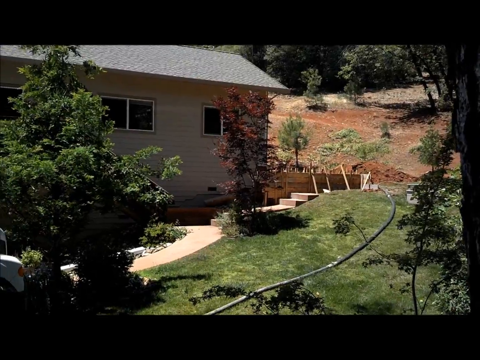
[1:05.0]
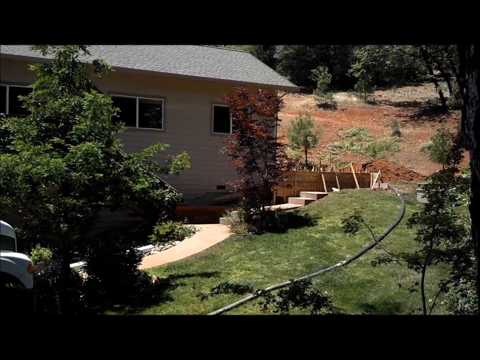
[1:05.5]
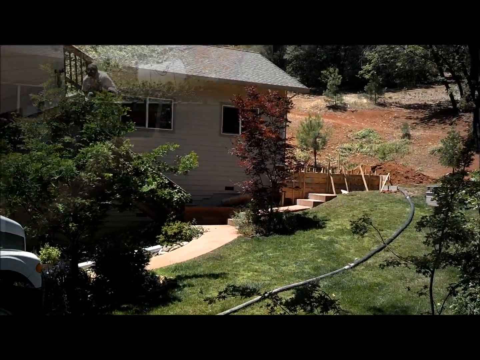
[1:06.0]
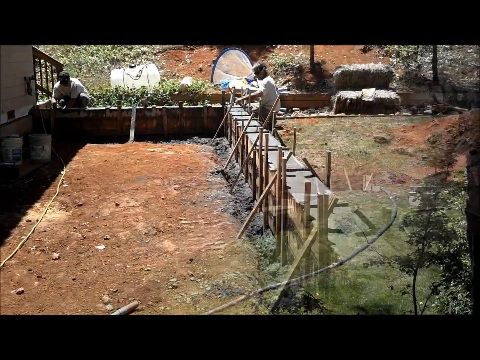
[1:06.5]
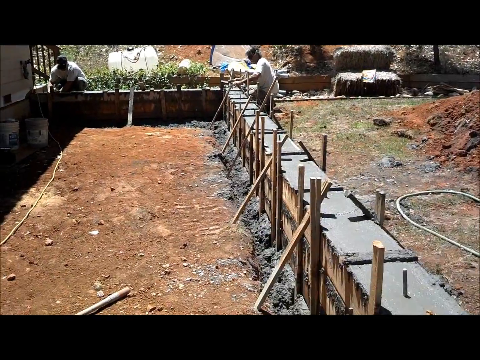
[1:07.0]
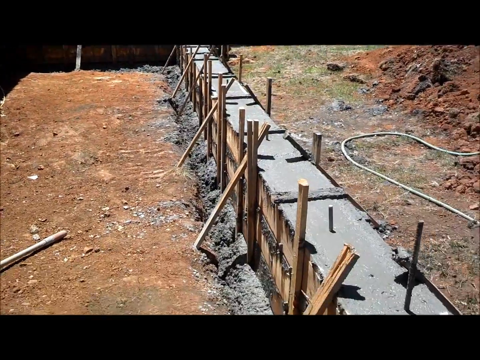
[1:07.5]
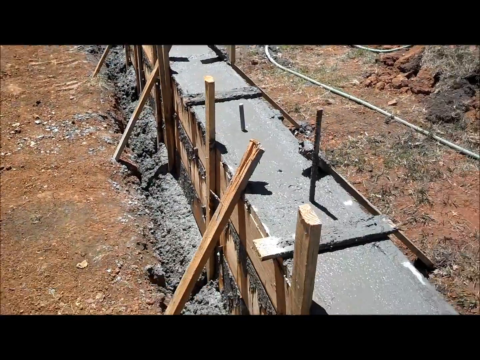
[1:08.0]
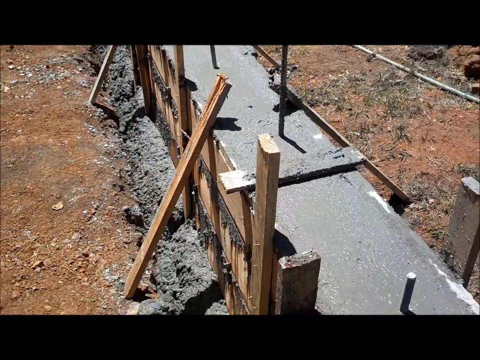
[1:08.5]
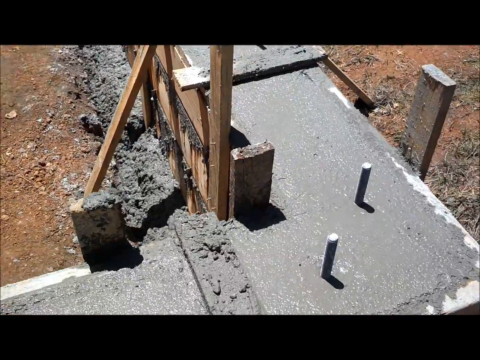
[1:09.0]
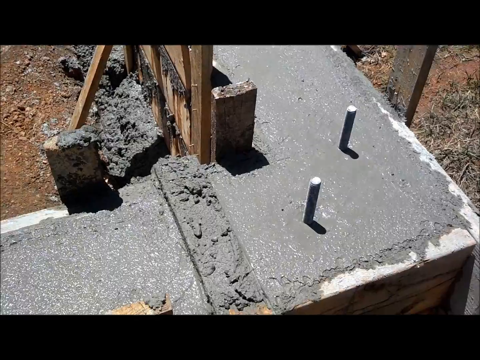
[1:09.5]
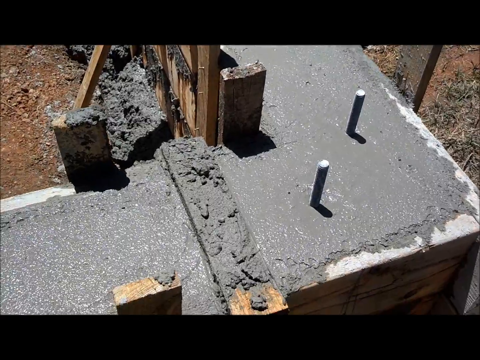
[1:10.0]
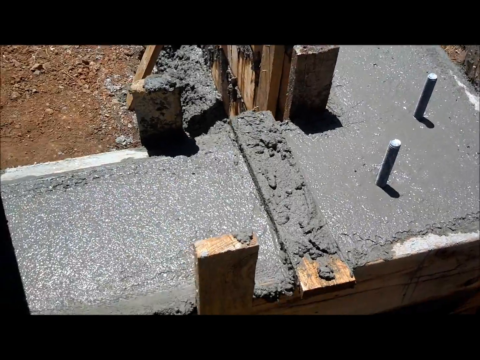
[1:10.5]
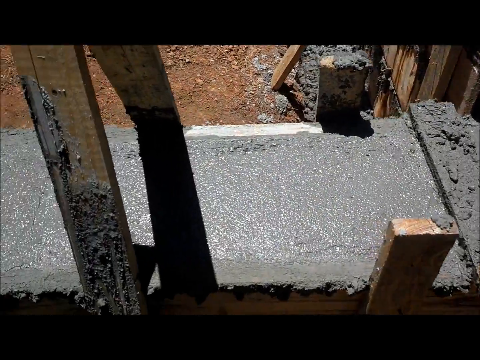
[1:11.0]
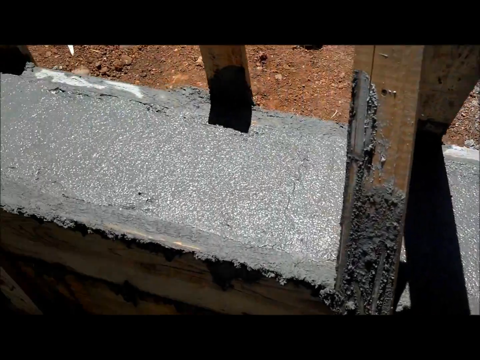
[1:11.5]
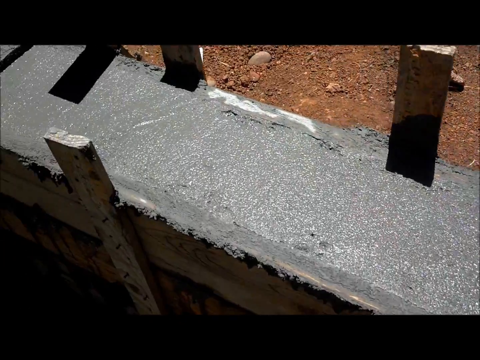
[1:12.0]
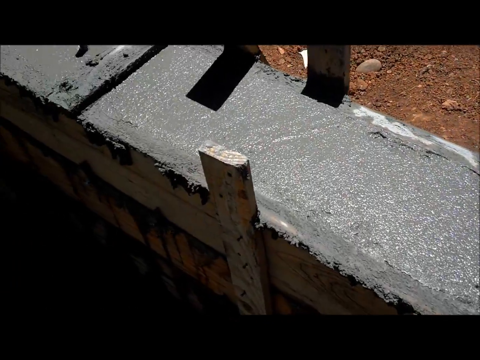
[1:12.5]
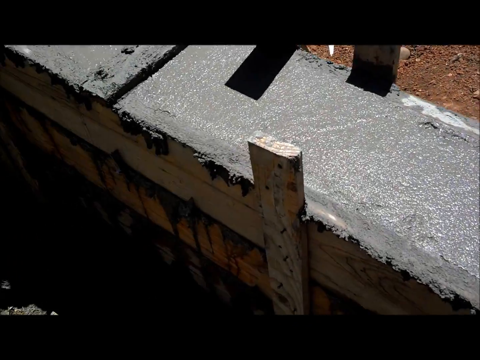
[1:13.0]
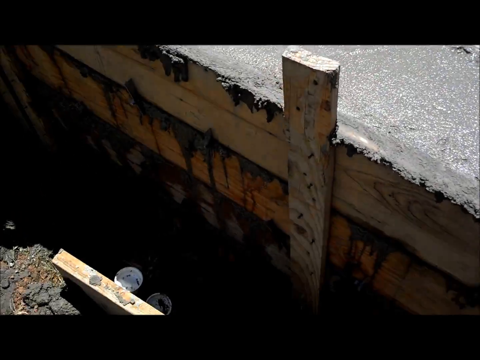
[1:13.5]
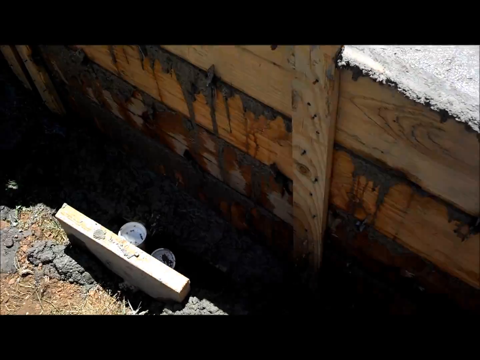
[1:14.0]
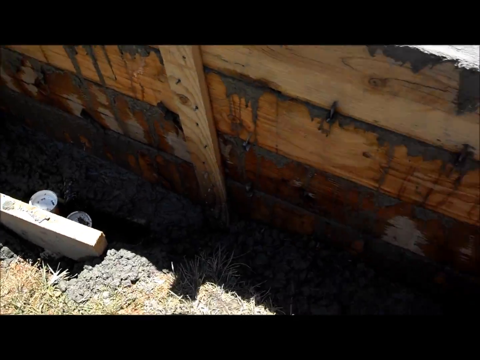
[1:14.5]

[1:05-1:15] Cement has been poured where the cinder blocks were, forming a border around the area of the subfloor being added to the house. The rebar is in place, with a couple of rebar sticks or metal pieces sticking out at the corners and other areas, and wooden sticks or stakes run across the border. The cement looks even and well filled in, though some has spilled over the edges and some has spilled inside the area.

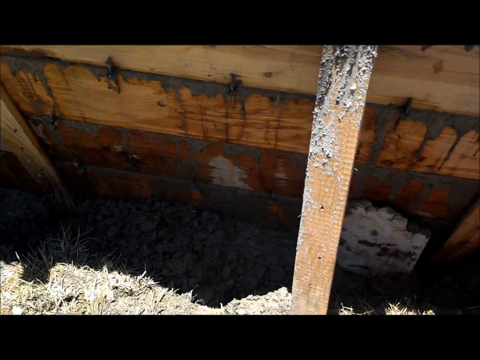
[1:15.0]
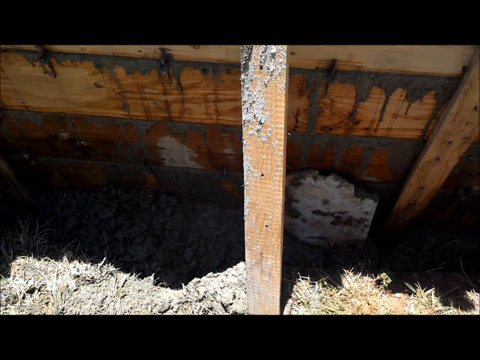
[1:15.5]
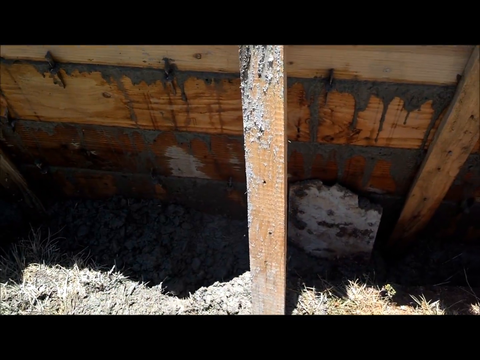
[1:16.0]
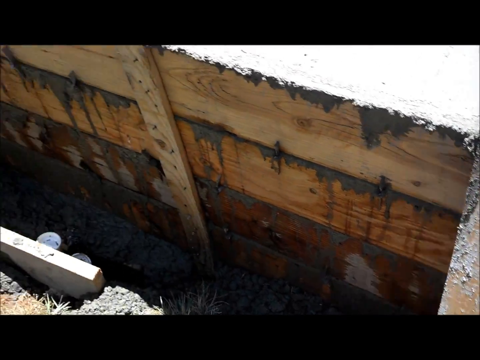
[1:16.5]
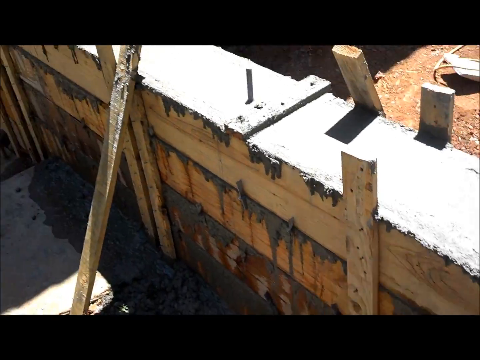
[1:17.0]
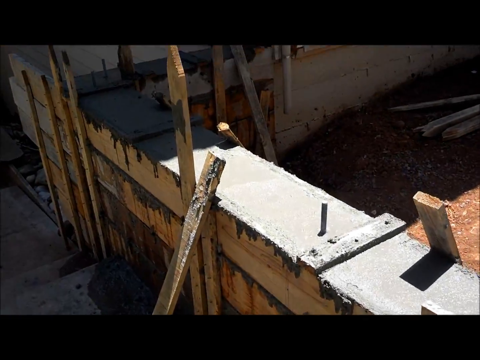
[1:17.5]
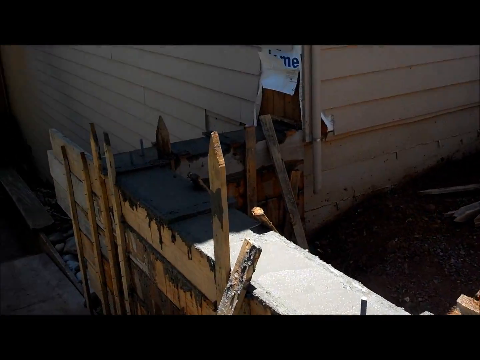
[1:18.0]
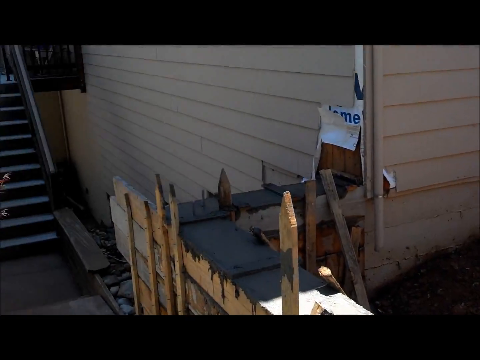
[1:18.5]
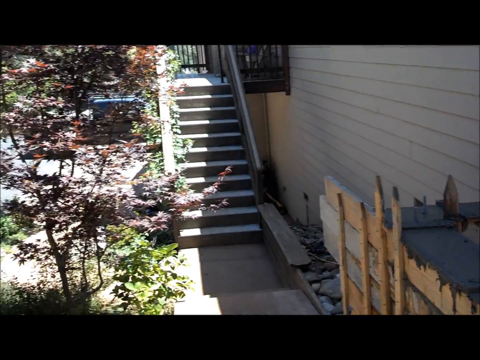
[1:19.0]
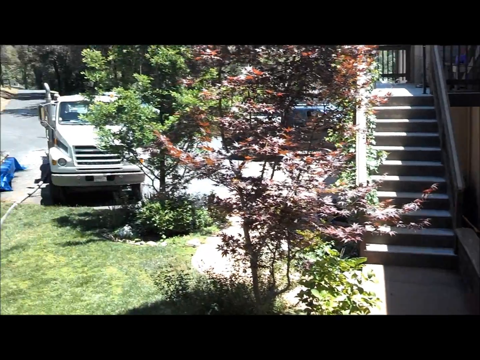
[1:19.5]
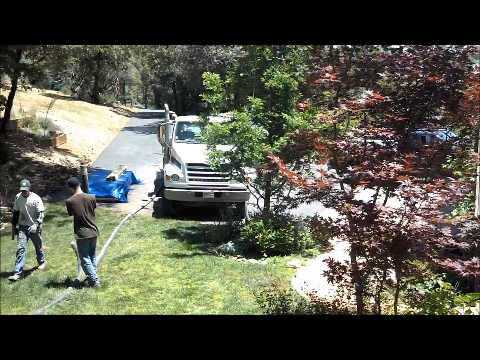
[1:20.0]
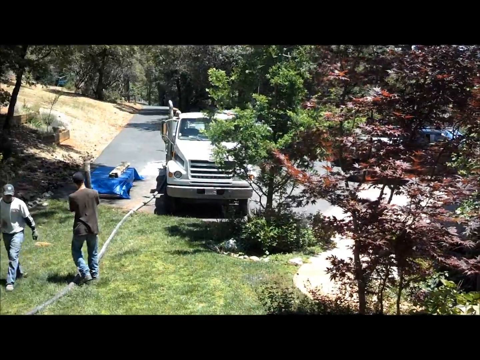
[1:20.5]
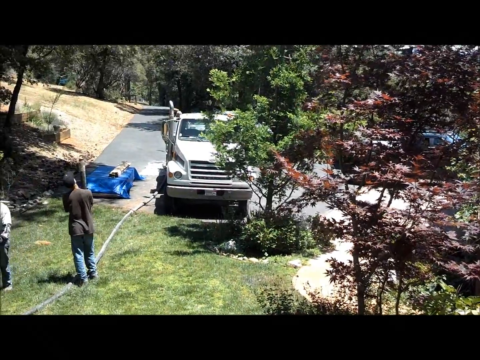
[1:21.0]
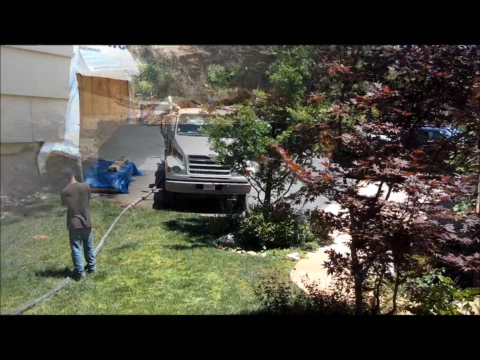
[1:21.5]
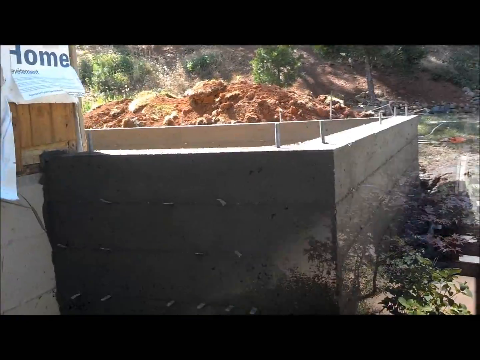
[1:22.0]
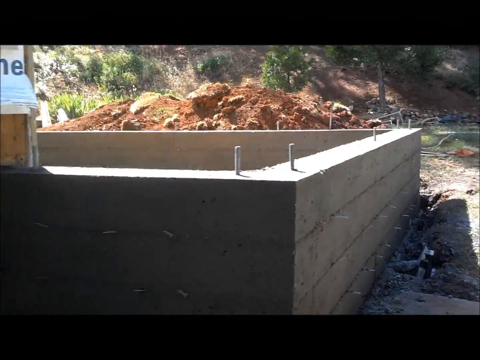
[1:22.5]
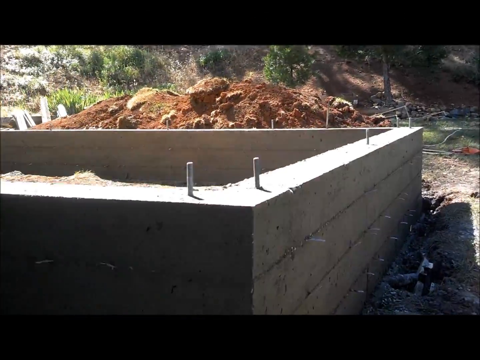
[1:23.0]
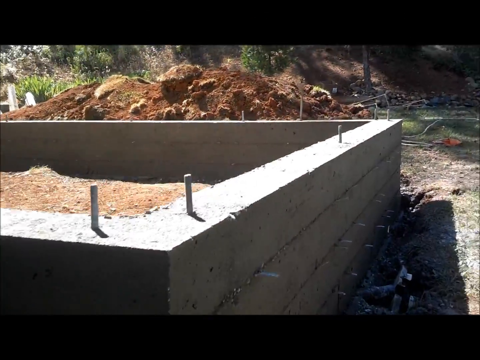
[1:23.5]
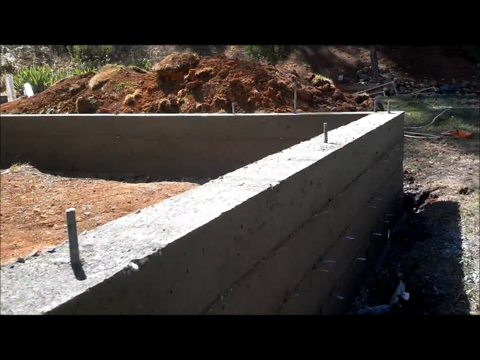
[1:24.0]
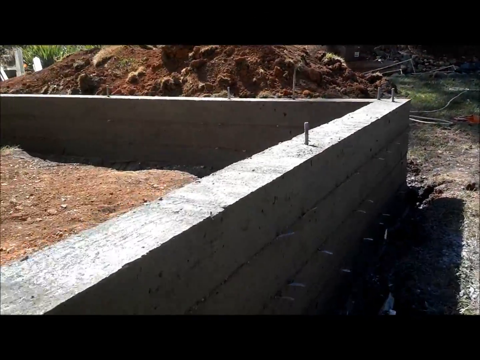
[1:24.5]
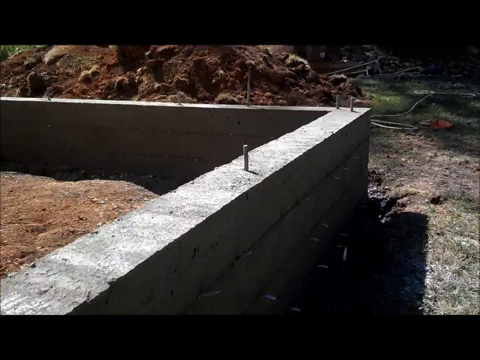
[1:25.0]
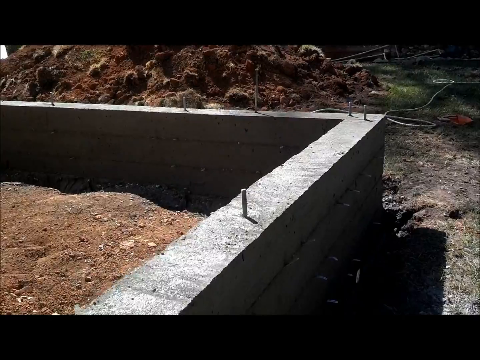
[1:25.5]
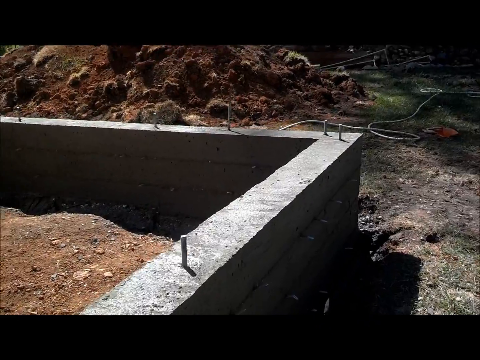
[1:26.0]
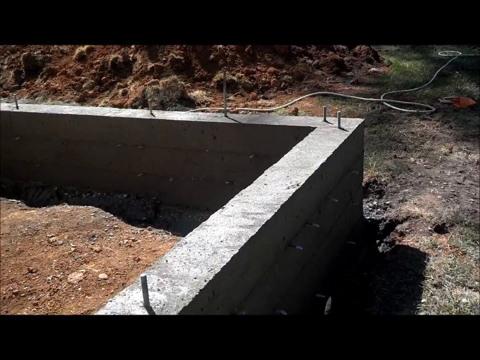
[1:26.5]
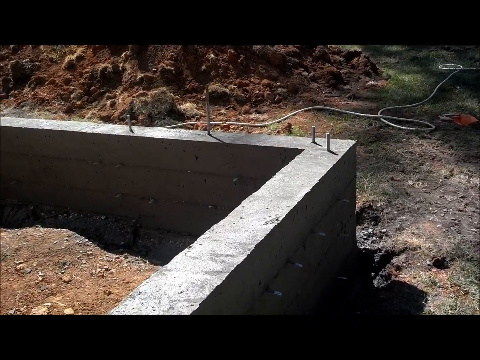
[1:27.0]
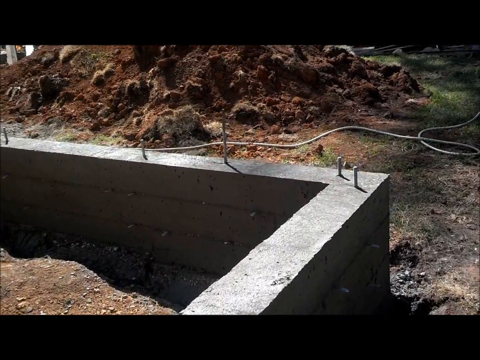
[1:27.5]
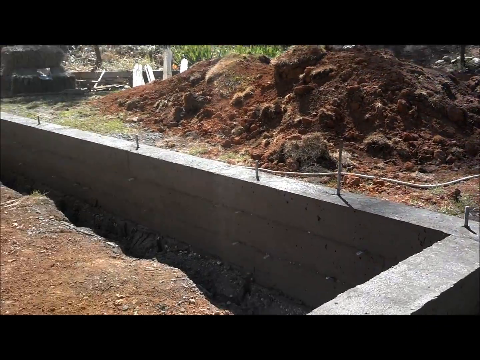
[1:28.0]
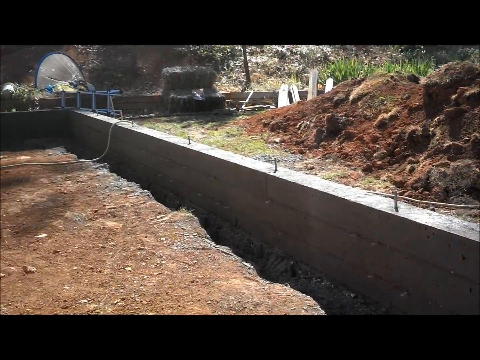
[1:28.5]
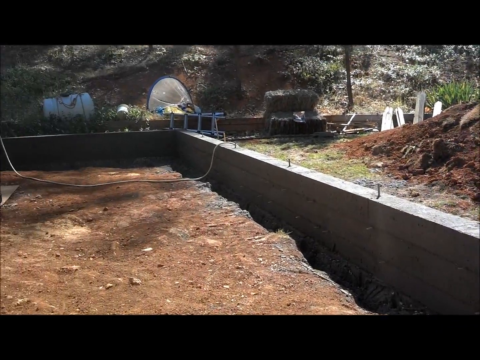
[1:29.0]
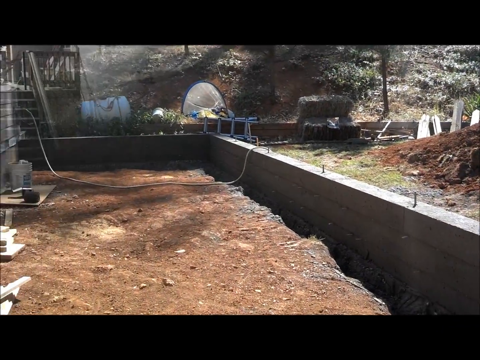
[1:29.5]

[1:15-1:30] The finished cement is shown afterward, apparently after a couple of days of drying, and it looks good. Metal sticks out at points throughout the cement, possibly for the walls and studs. A few workers or family members roam around working. One white man in a black shirt and blue jeans seems not to be working and looks to be just standing. Another man, in a light white or gray shirt, blue jeans, a hat and what looks like a tool belt, is working, and at the end he sprays something. The cement truck is gone, but the other truck is still there, apparently with materials on its bed.